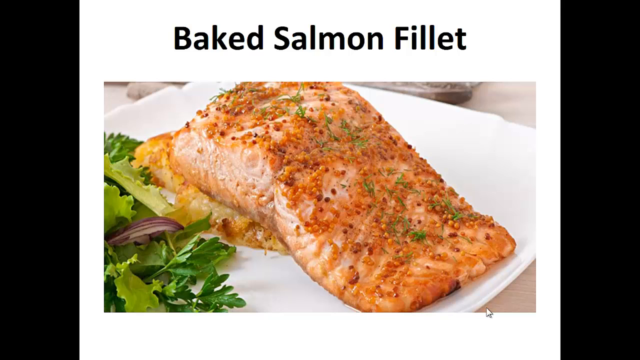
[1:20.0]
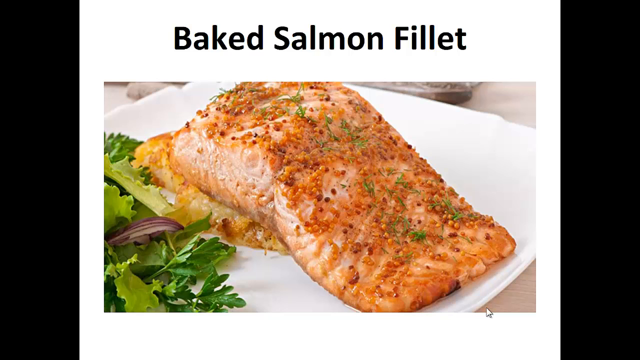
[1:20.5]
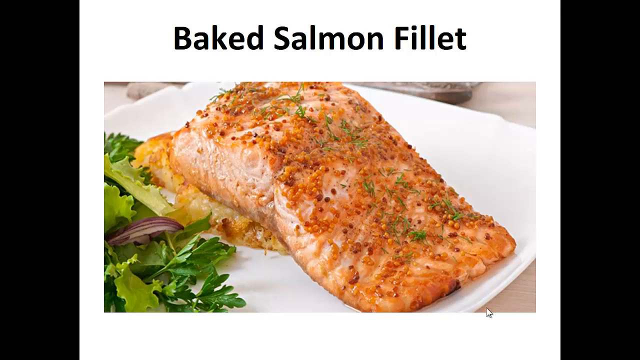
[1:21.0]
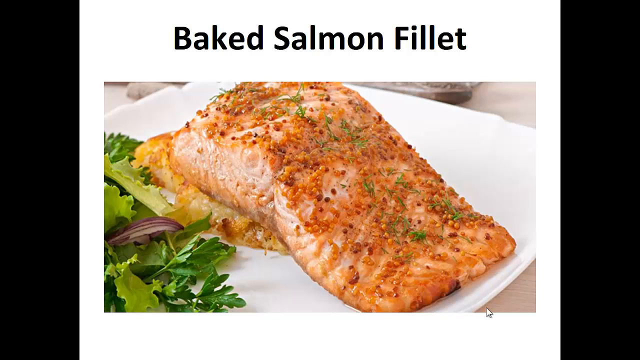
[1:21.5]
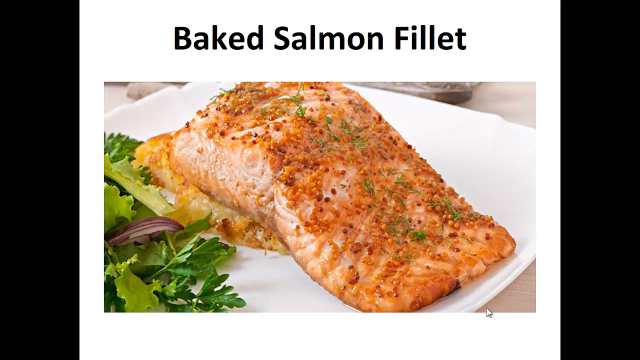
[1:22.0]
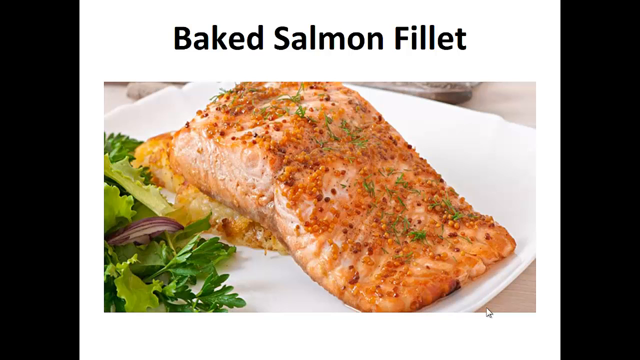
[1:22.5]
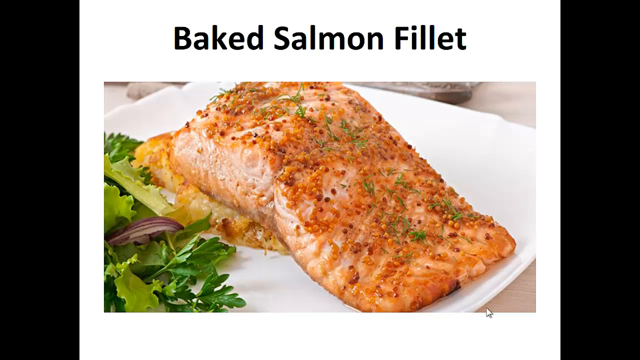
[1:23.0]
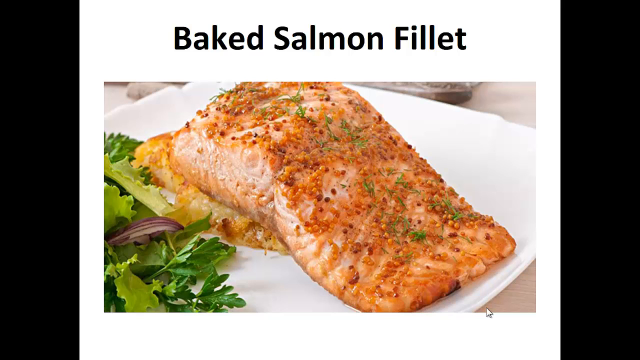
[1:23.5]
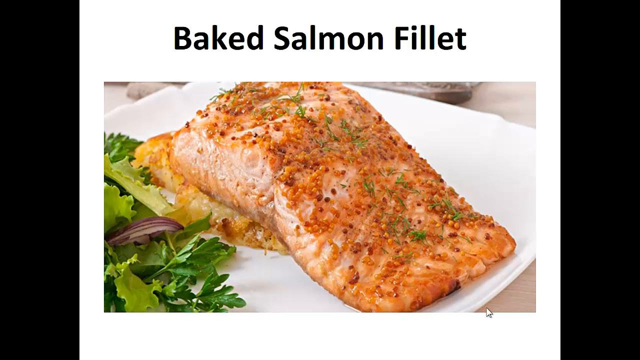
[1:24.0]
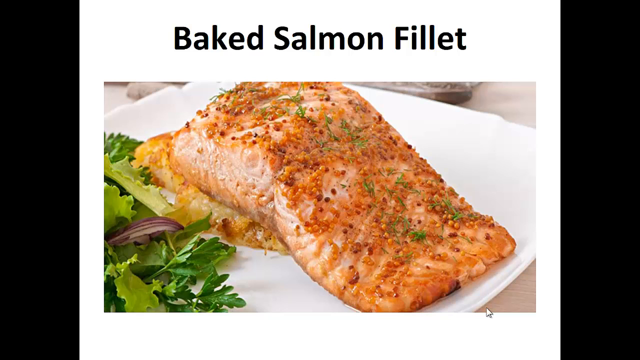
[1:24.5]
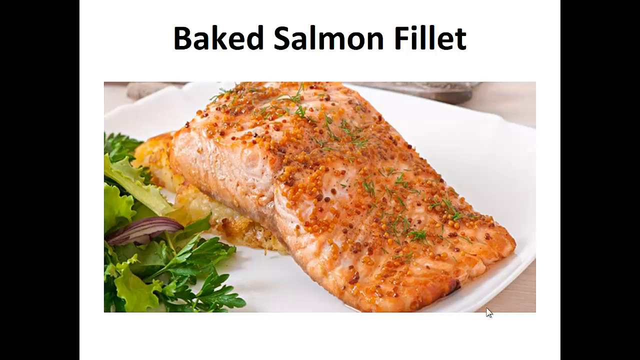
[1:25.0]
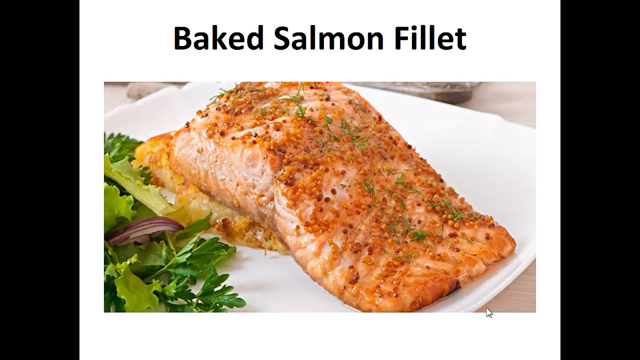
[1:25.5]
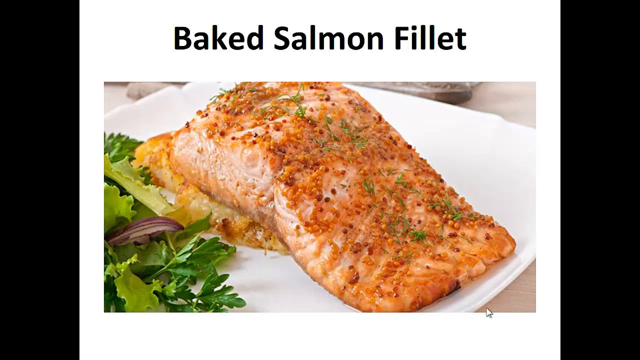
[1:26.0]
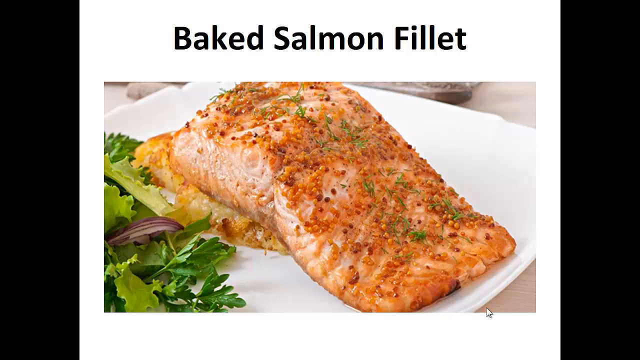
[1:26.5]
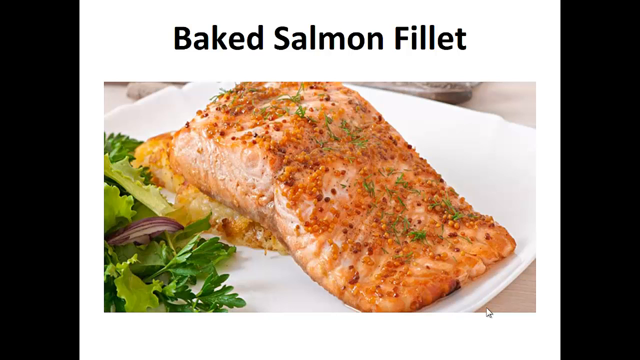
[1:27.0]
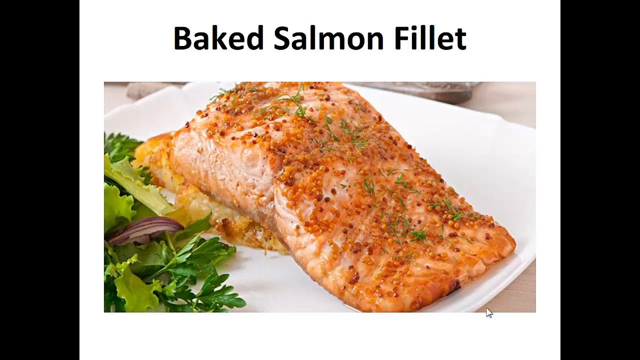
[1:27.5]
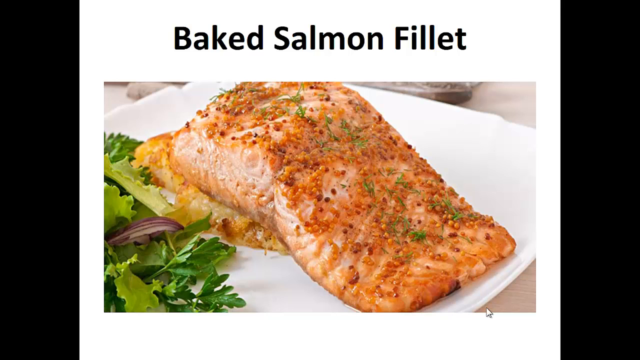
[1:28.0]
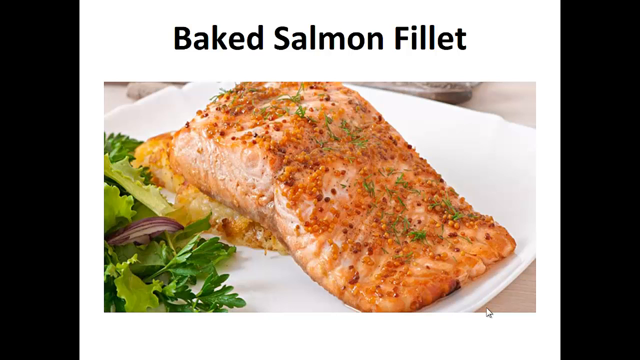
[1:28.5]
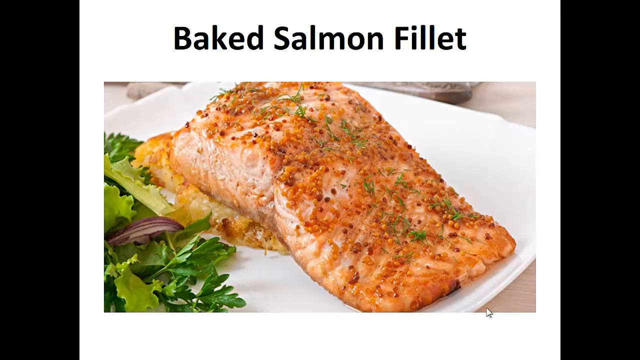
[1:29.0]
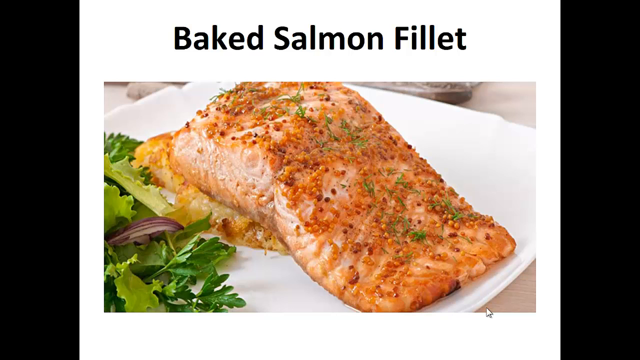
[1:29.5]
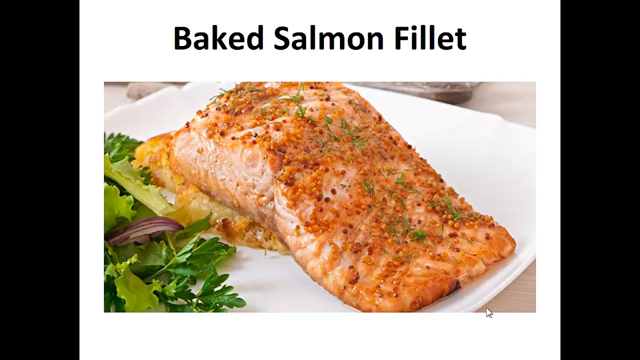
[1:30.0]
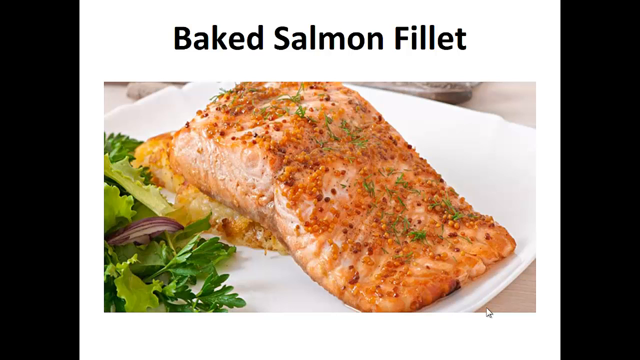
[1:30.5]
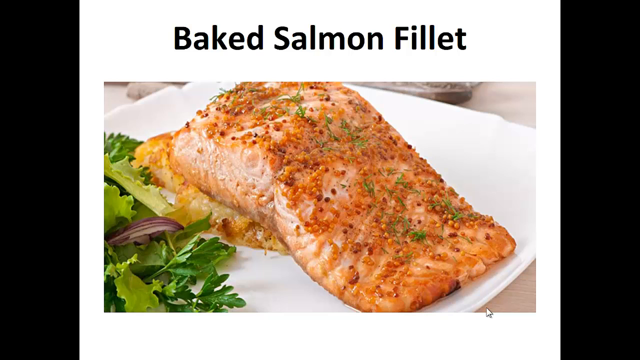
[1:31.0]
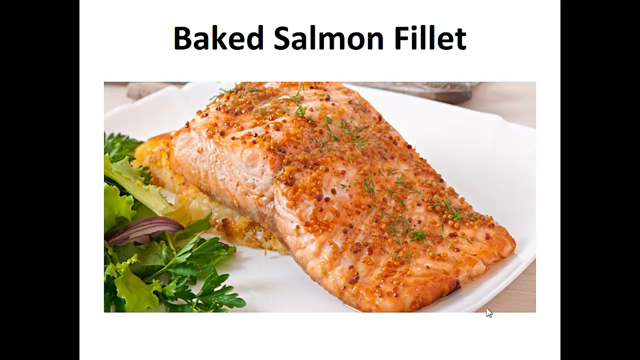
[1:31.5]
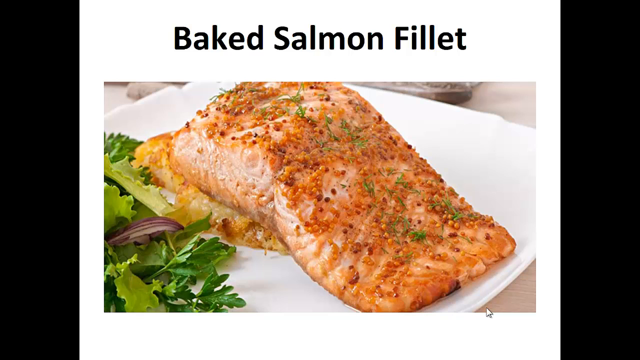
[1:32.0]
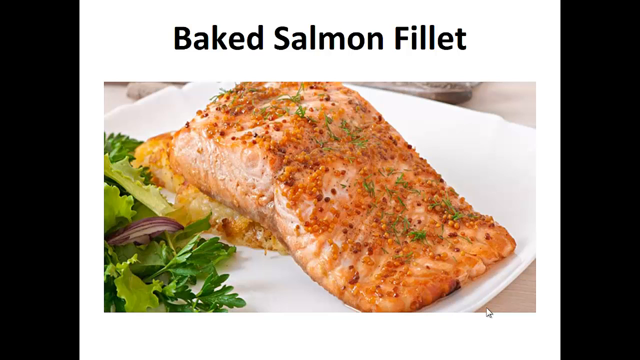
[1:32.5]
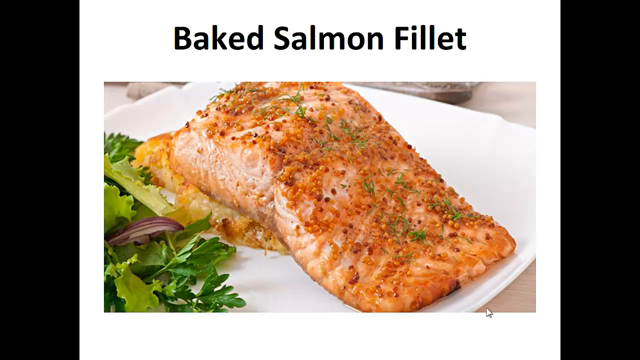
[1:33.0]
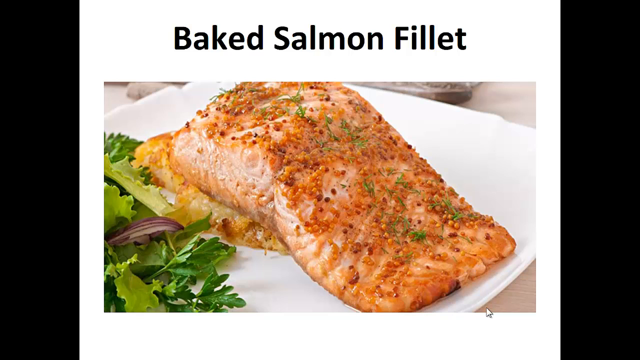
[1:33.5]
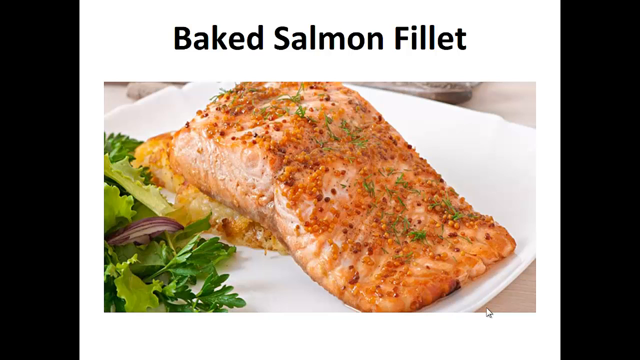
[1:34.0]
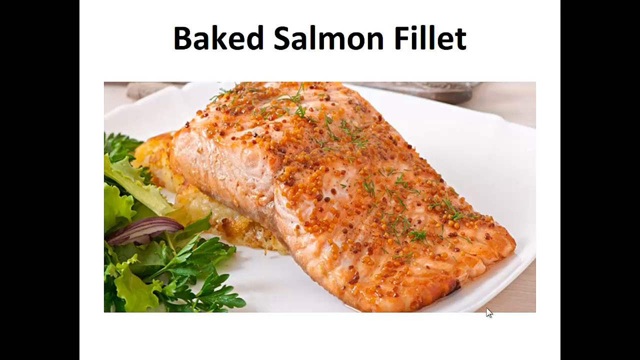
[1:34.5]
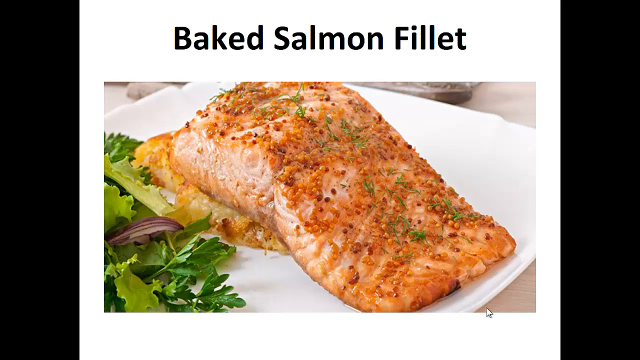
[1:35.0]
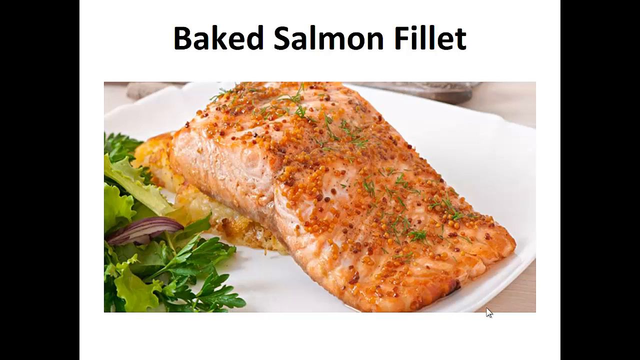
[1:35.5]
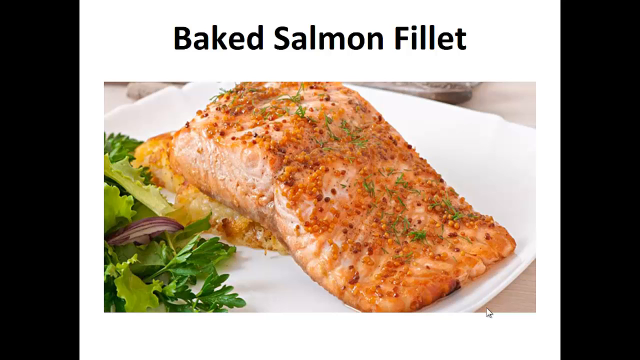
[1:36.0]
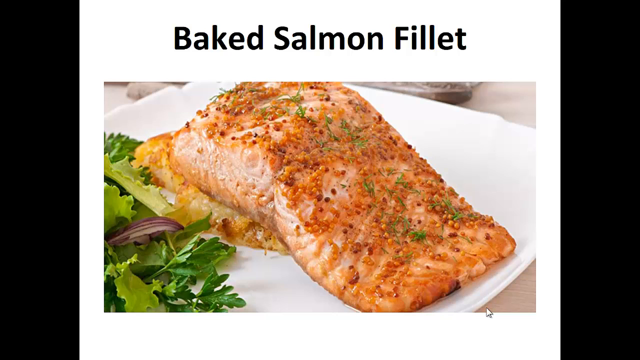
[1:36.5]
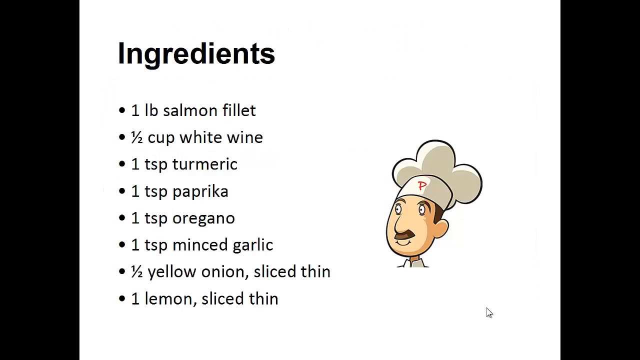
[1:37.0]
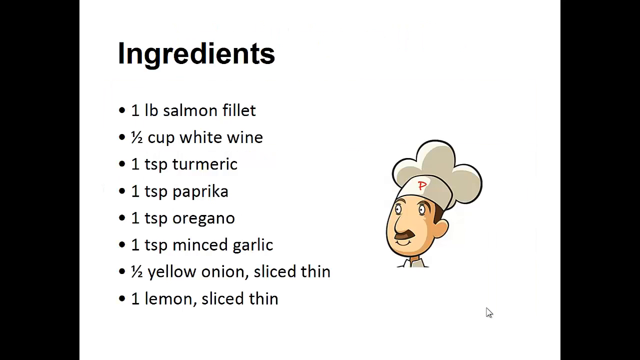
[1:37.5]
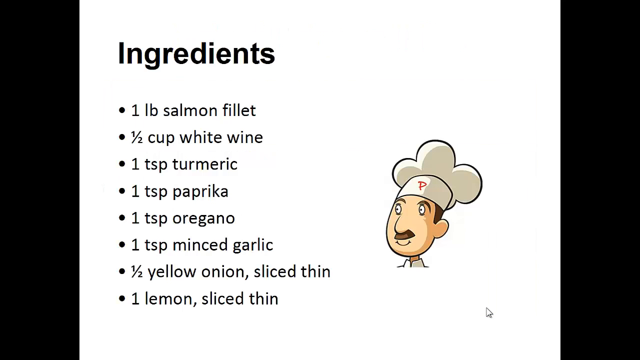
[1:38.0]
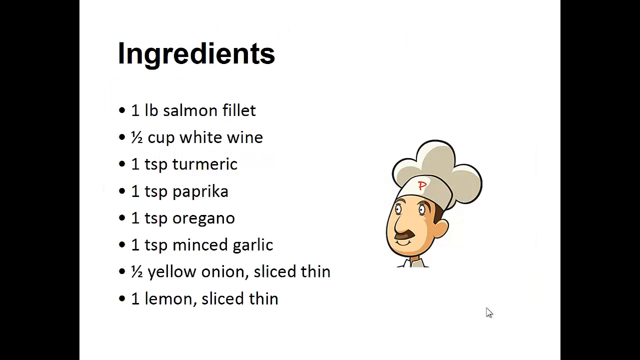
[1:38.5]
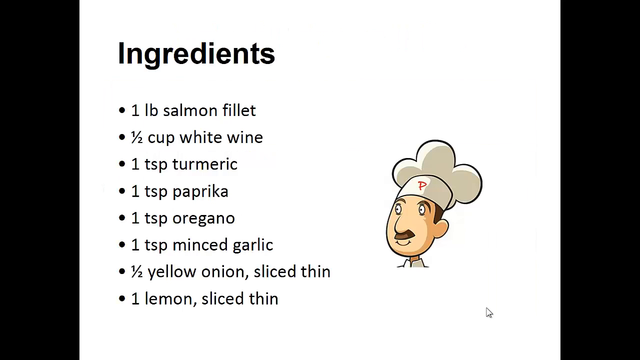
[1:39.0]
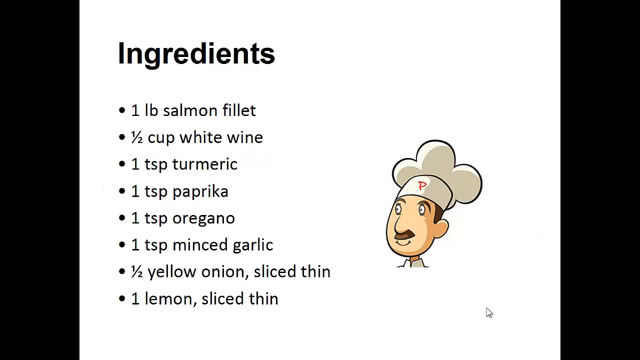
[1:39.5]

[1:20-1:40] An arrow cursor, like one on a desktop or laptop, appears on screen but does not move, suggesting the video may be made of screenshots or still images. A title reading "Ingredients" is written in very bold black letters, followed by a list of ingredients for the baked salmon fillets, including "one LB salmon fillet" and "half a cup of white wine". There is also an illustration of a cartoon man who looks like a chef, with a moustache and short hair, wearing a chef's hat with a red P on it, possibly Paulie Peters' logo.